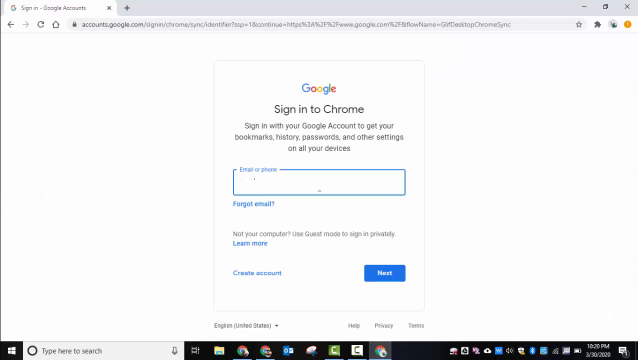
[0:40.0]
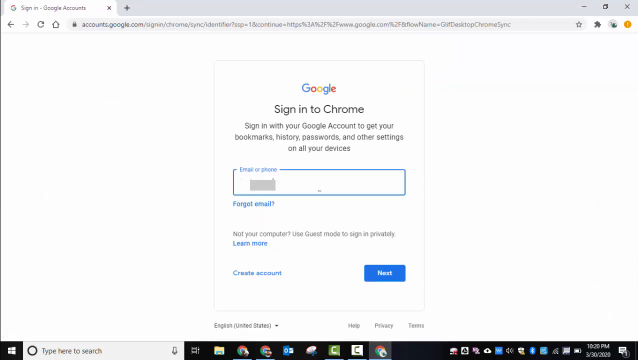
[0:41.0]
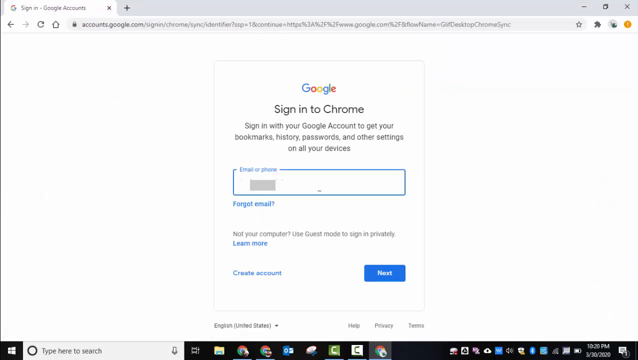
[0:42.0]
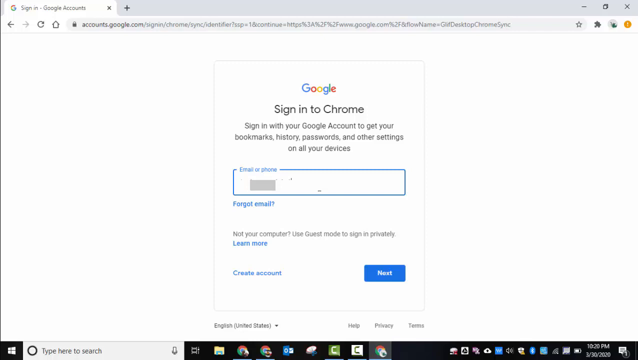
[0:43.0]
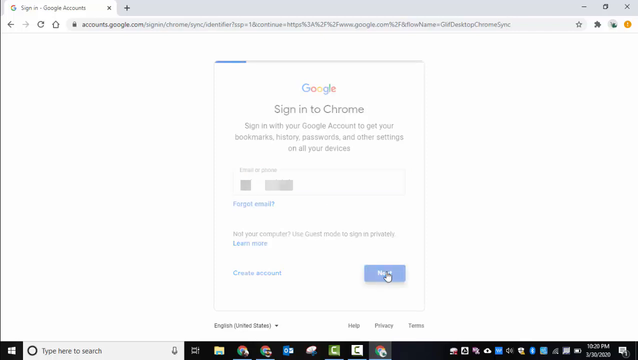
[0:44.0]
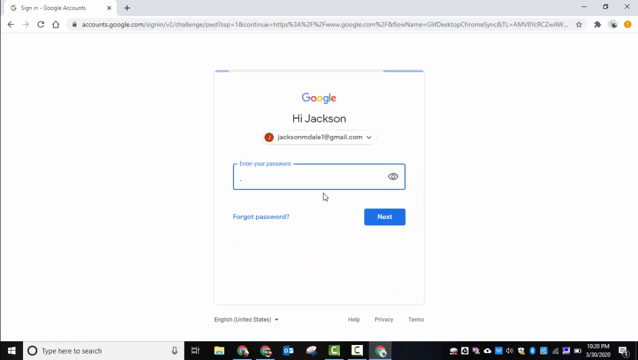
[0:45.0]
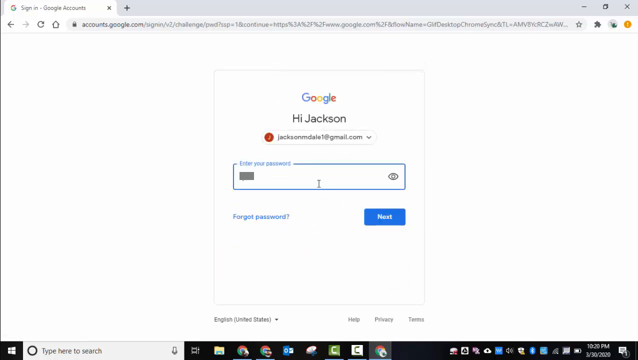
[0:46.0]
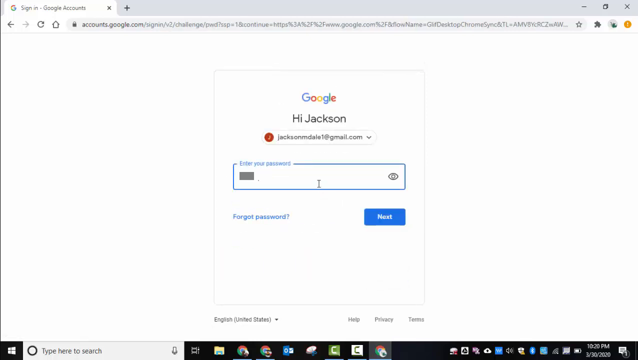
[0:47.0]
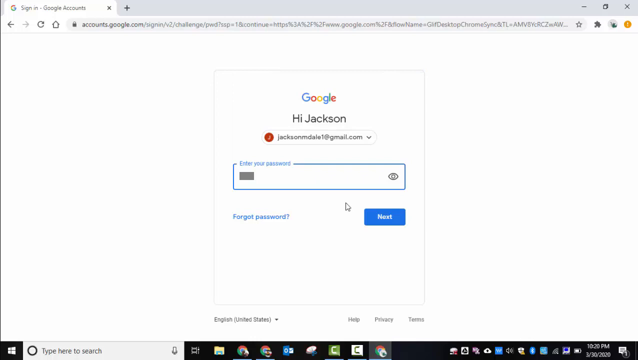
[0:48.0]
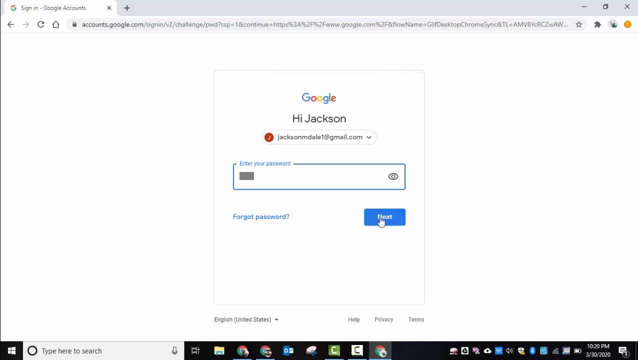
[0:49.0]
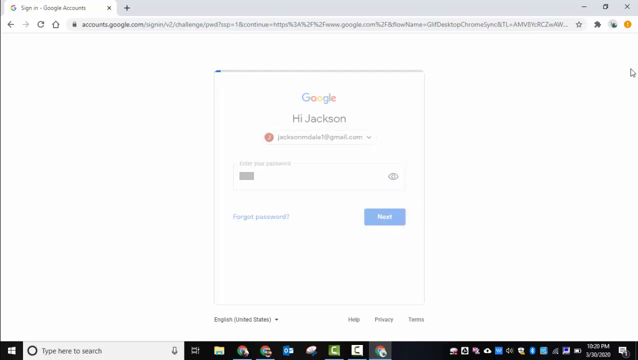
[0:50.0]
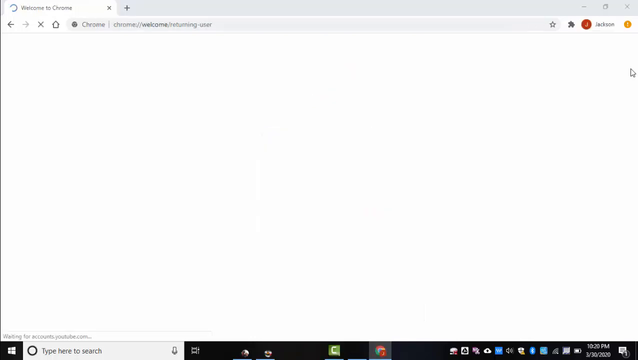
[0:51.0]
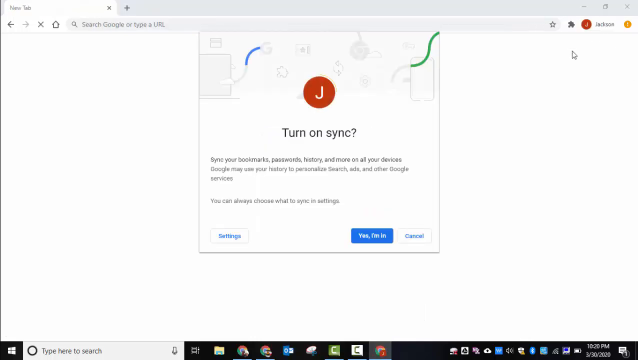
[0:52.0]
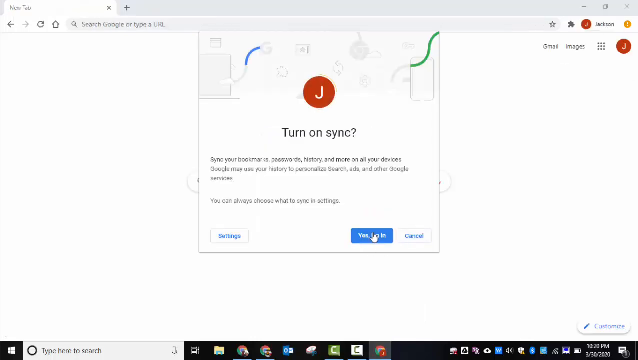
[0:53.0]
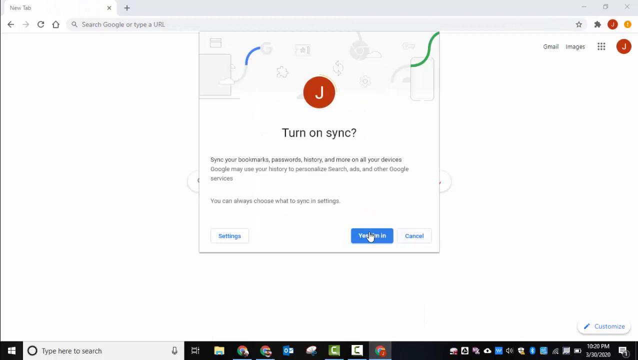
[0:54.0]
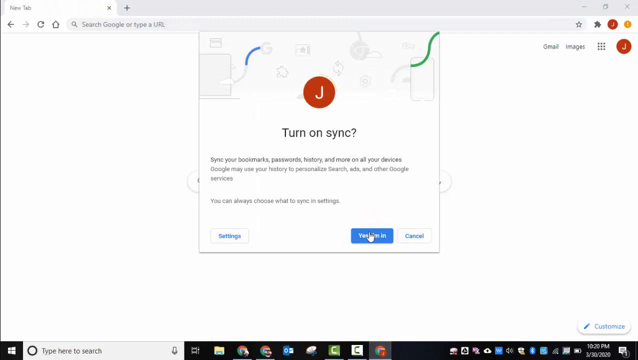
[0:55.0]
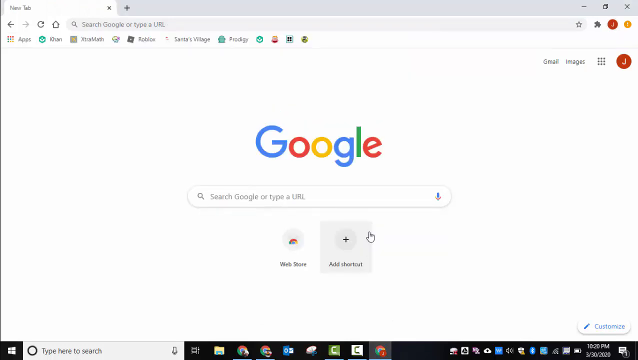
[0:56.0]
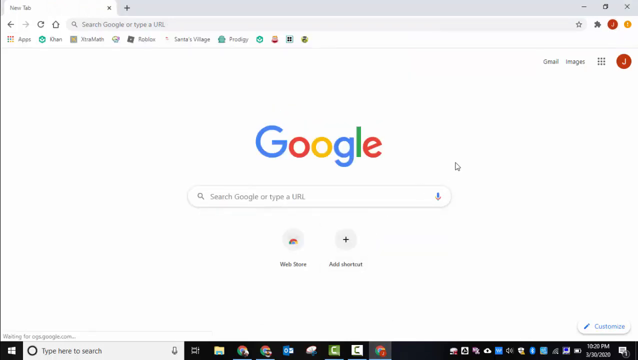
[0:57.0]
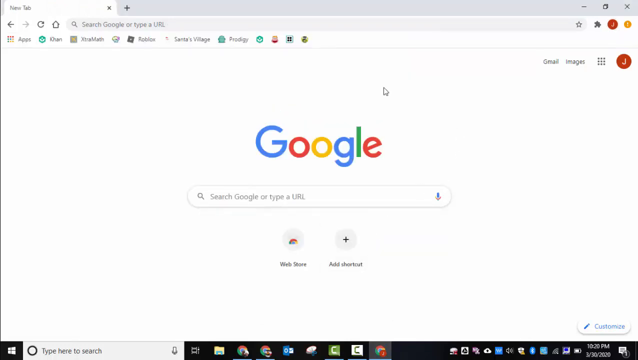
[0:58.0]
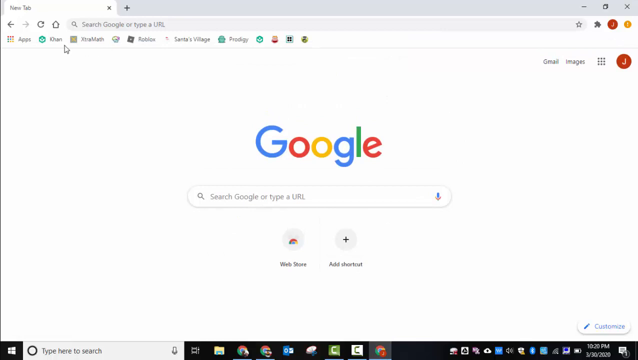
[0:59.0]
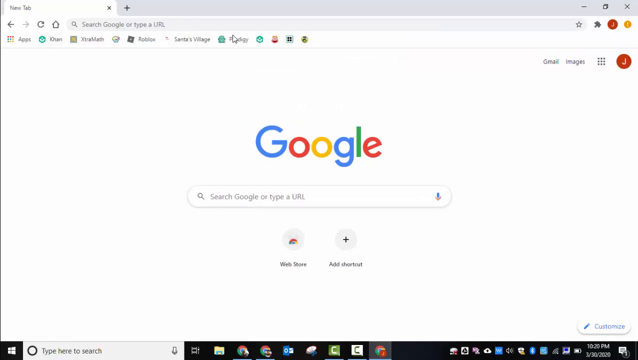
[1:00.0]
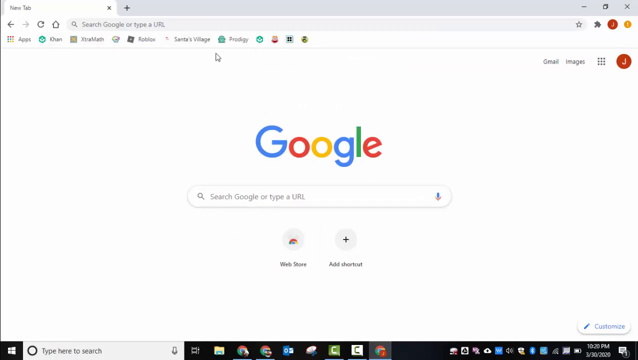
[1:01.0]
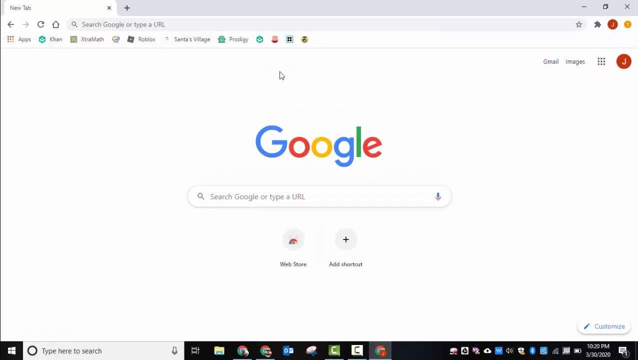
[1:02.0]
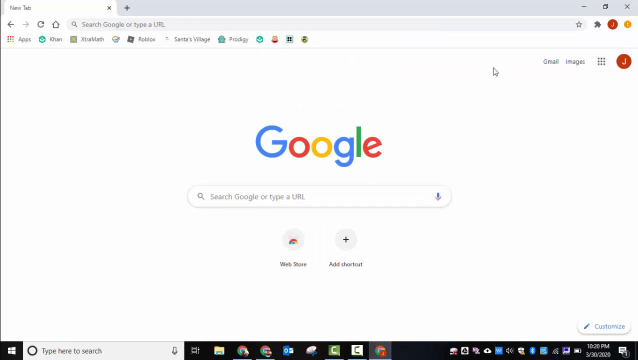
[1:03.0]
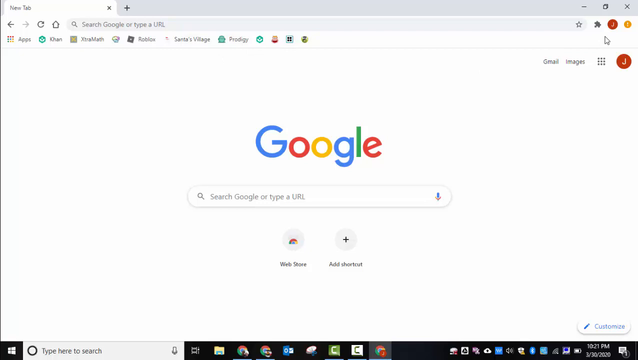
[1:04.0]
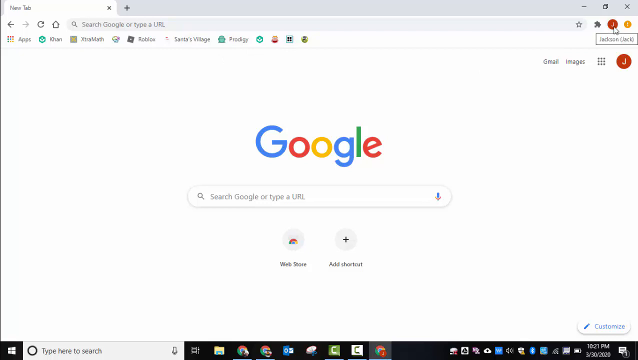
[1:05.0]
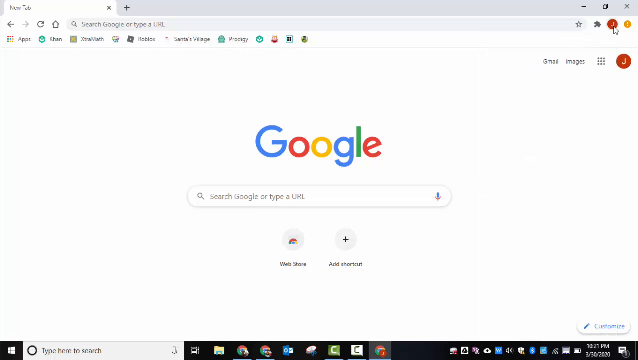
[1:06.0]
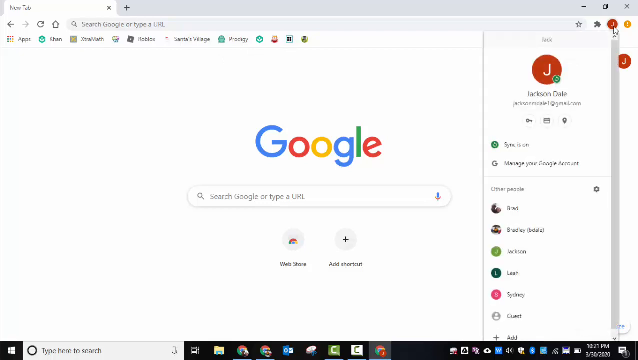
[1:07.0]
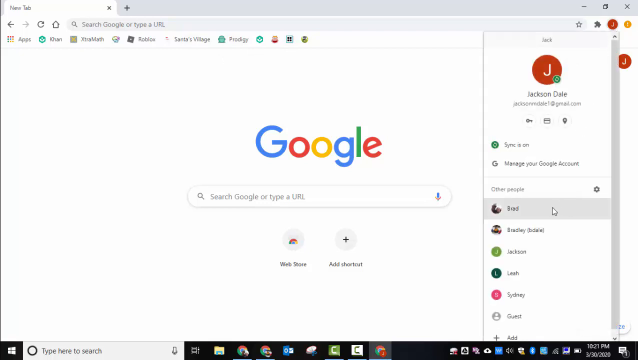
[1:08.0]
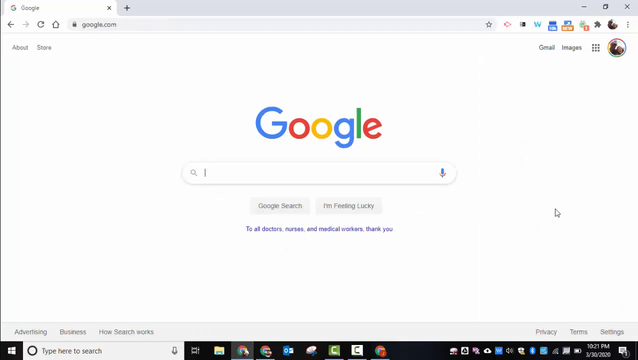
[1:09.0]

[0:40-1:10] The new account is signed in, and a prompt asks "are you done? are you in", which is answered with "yes, I'm in", finishing the addition of the new profile. The video then shows how to use the multiple accounts: the profile at the top is clicked, the different accounts drop down, and one of them is chosen.